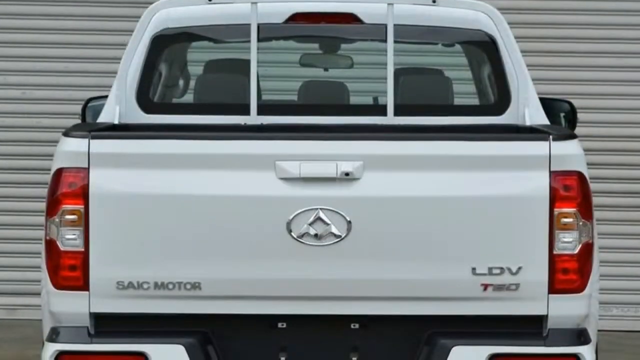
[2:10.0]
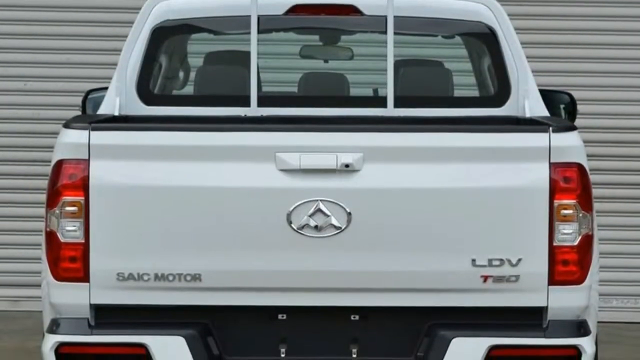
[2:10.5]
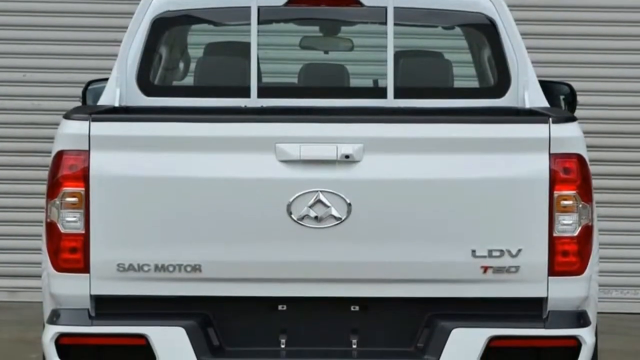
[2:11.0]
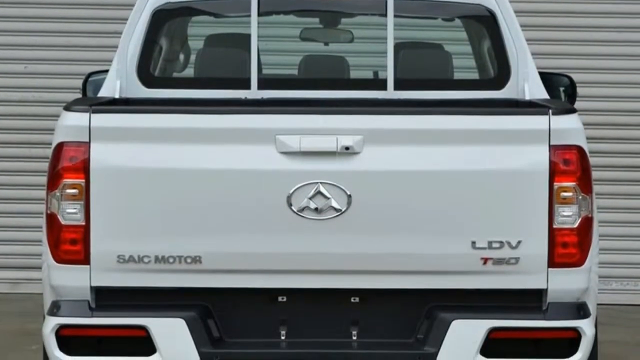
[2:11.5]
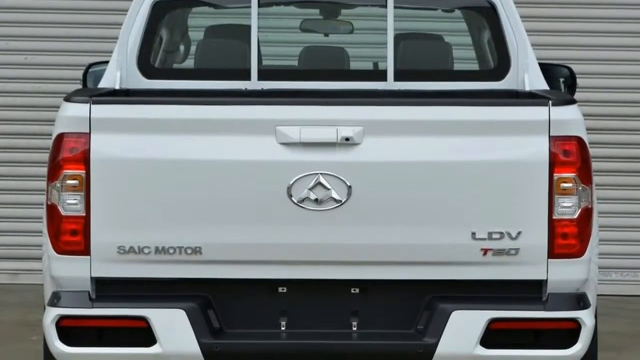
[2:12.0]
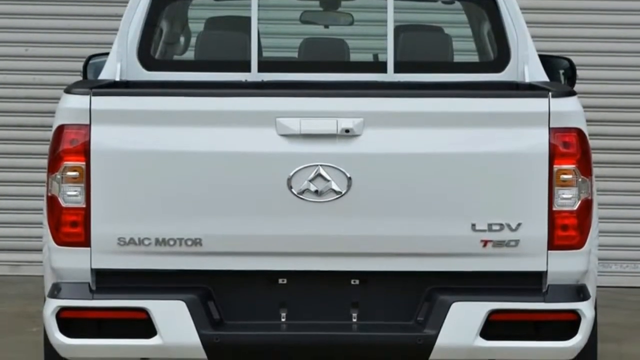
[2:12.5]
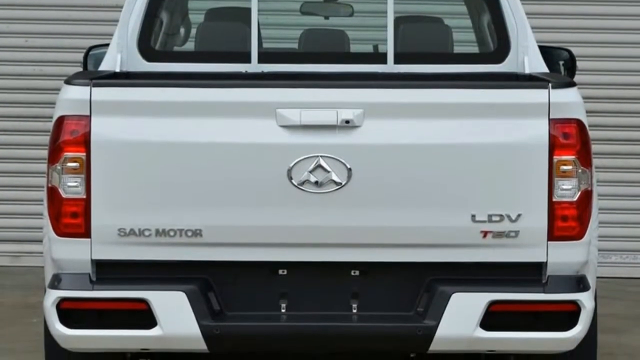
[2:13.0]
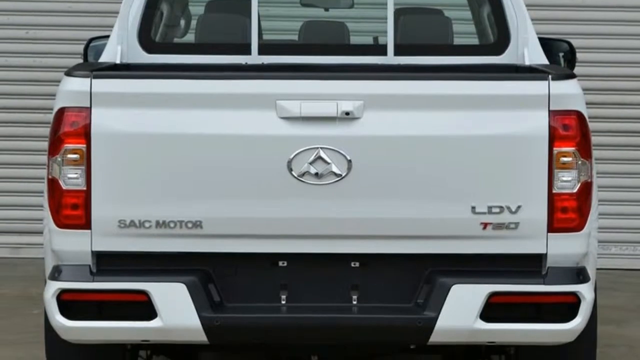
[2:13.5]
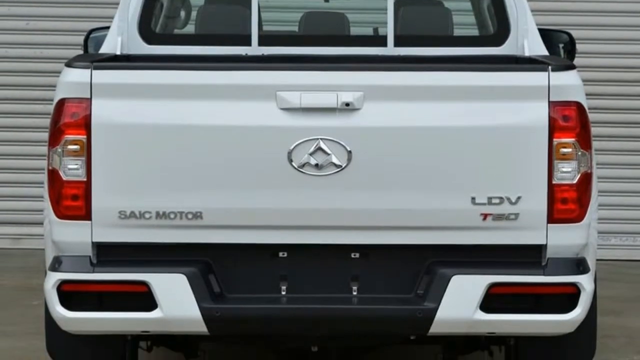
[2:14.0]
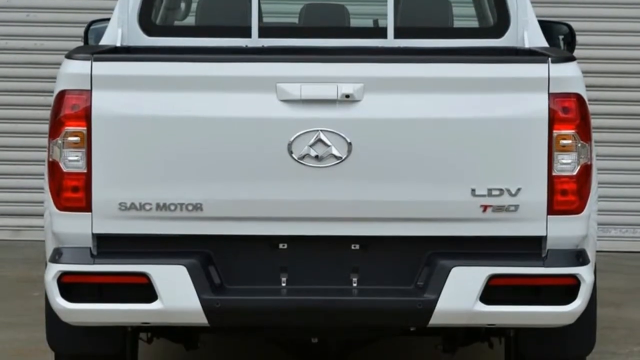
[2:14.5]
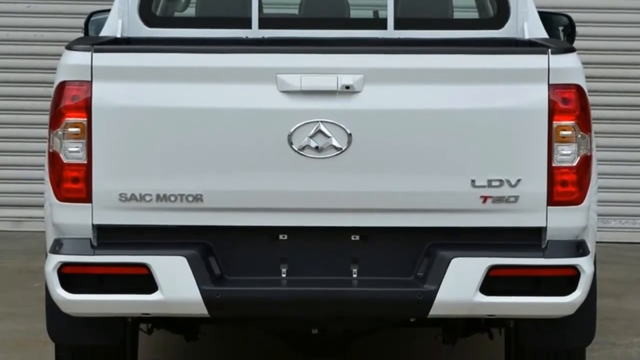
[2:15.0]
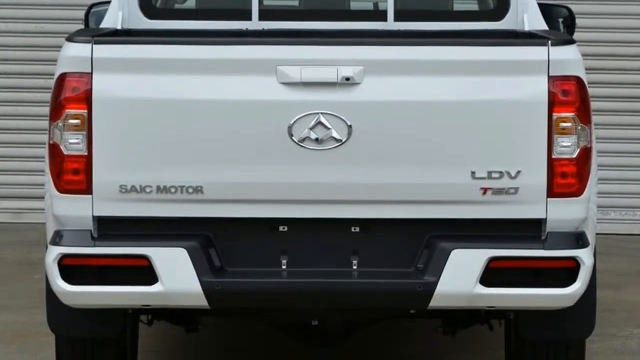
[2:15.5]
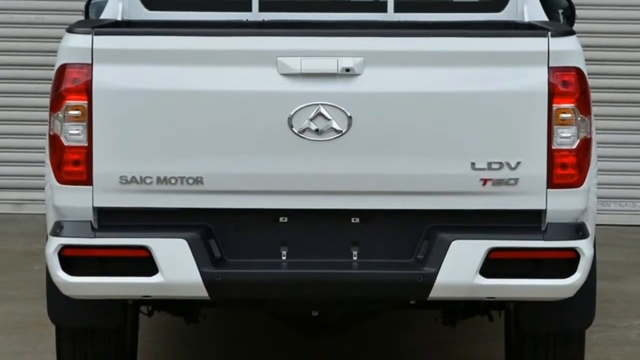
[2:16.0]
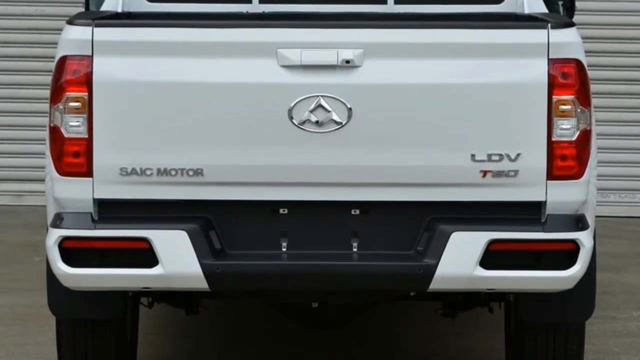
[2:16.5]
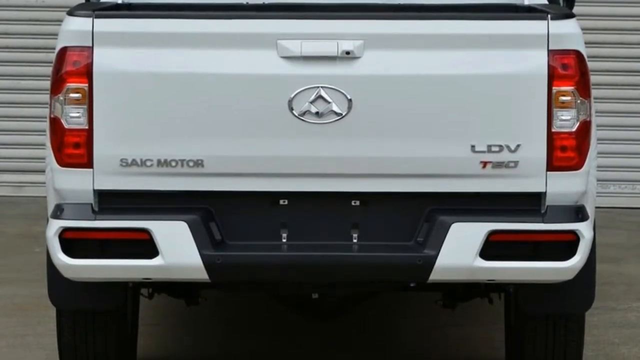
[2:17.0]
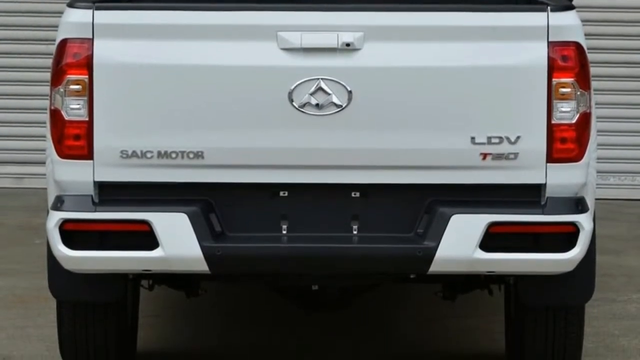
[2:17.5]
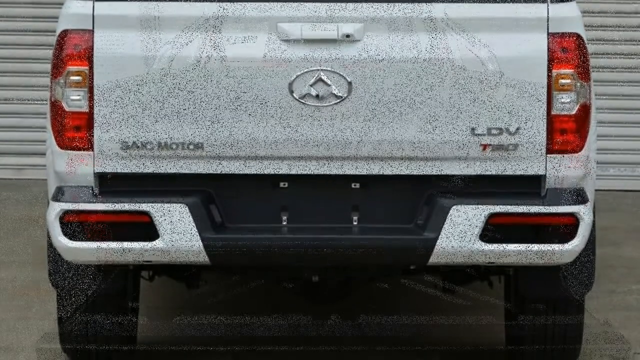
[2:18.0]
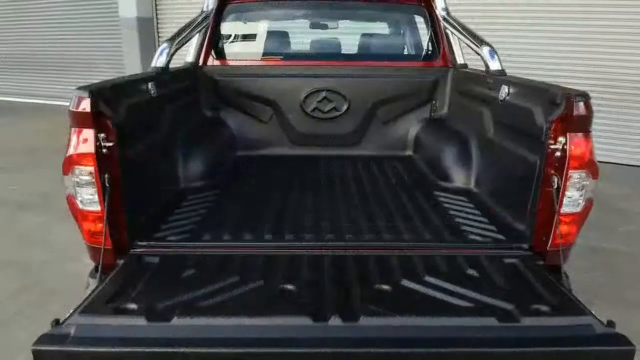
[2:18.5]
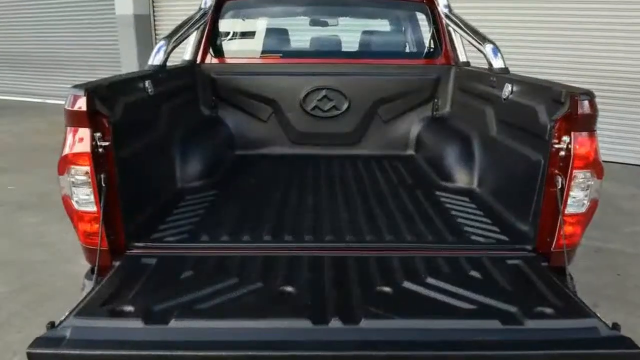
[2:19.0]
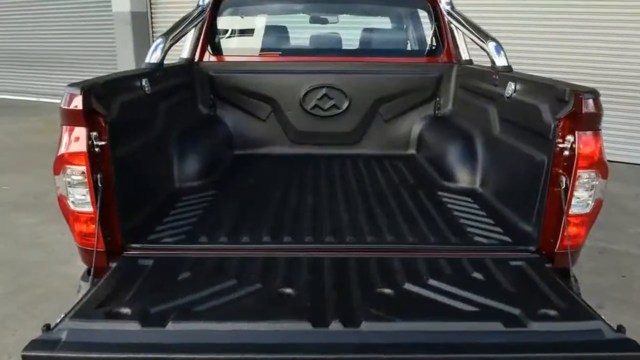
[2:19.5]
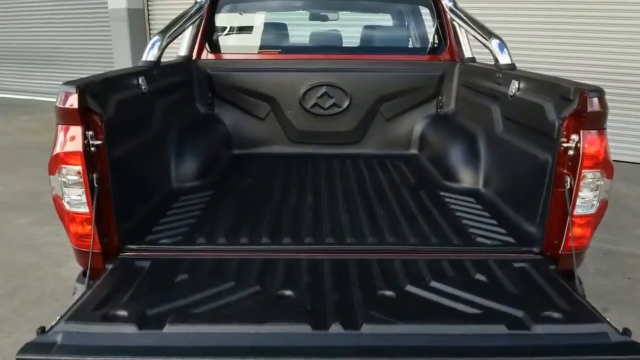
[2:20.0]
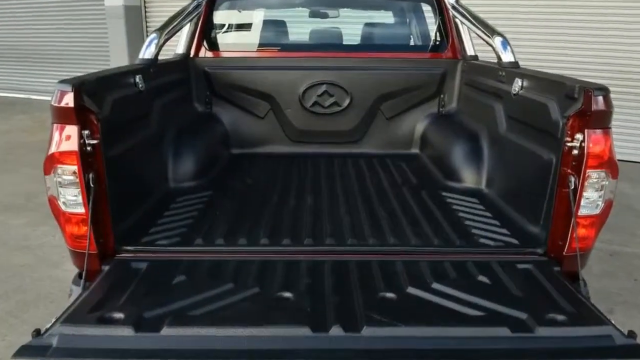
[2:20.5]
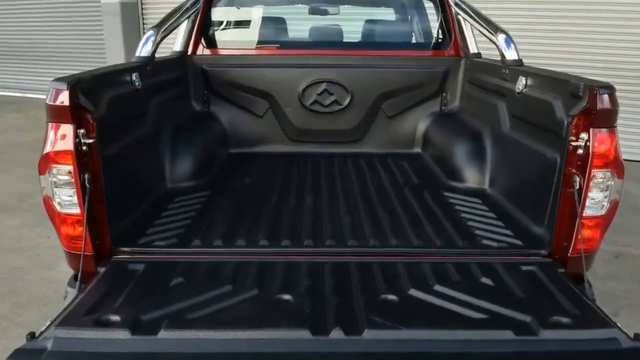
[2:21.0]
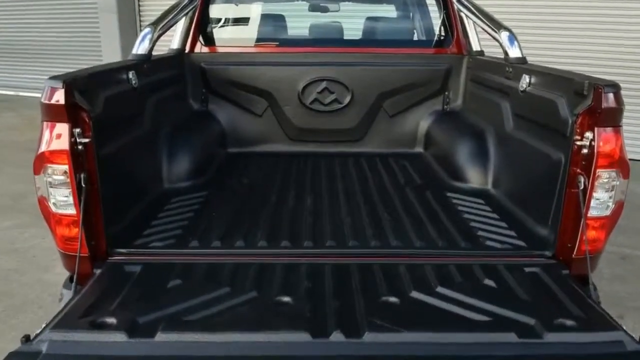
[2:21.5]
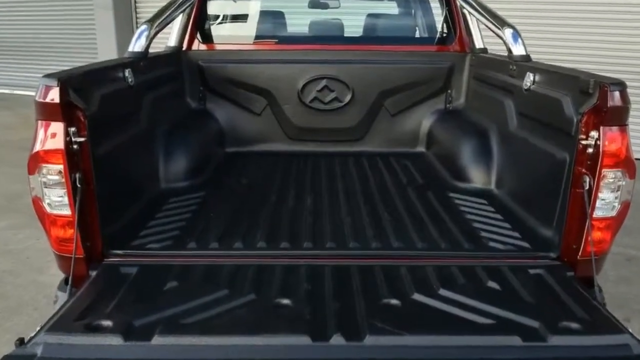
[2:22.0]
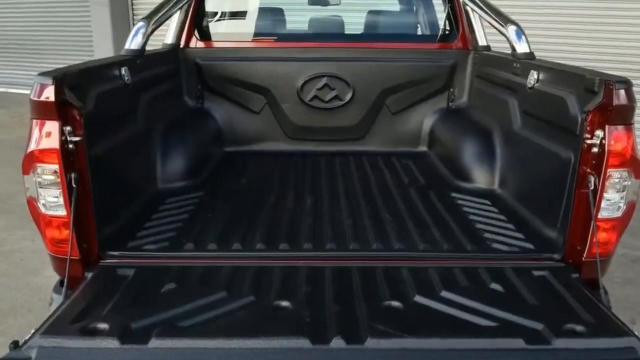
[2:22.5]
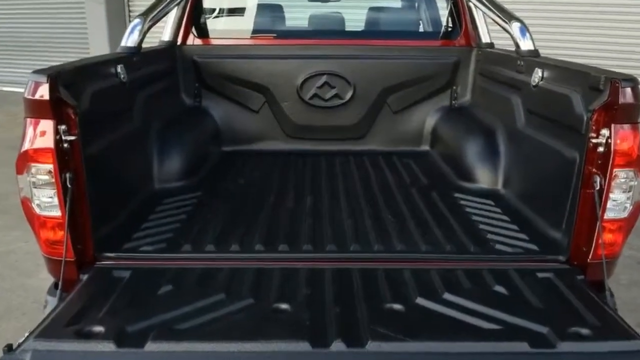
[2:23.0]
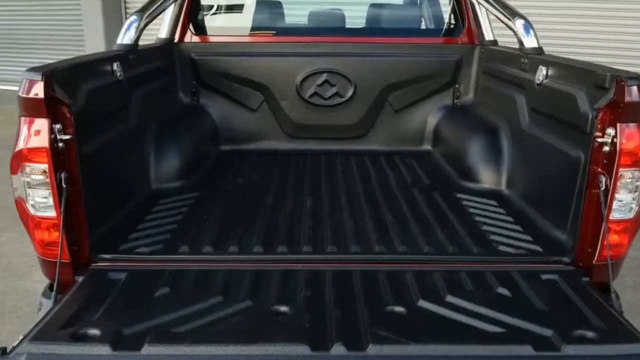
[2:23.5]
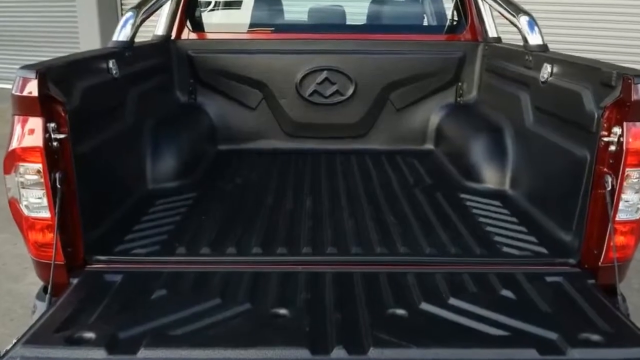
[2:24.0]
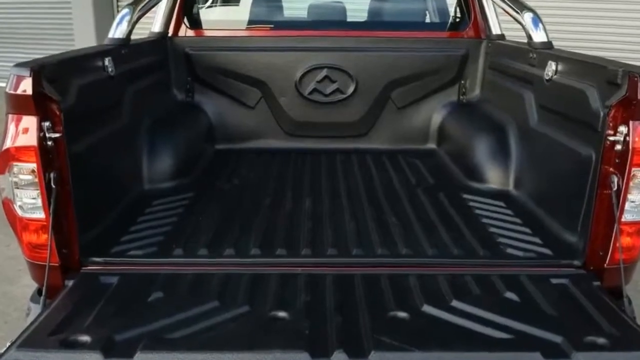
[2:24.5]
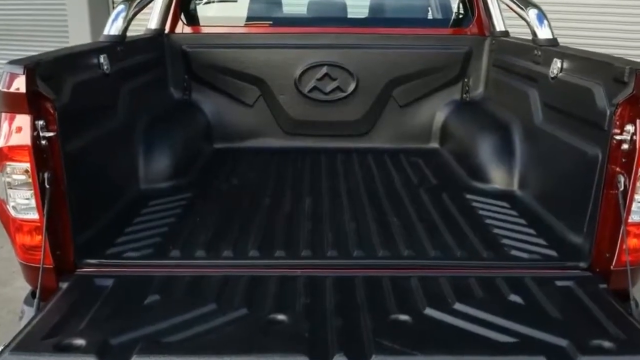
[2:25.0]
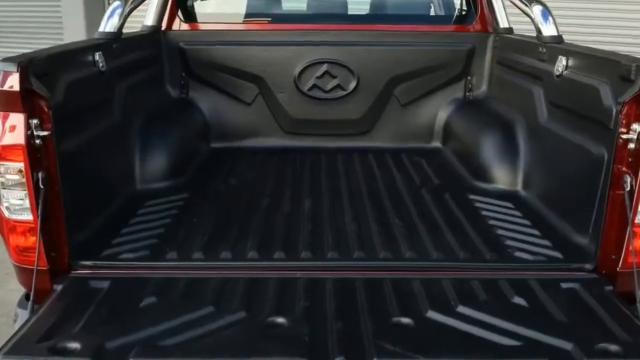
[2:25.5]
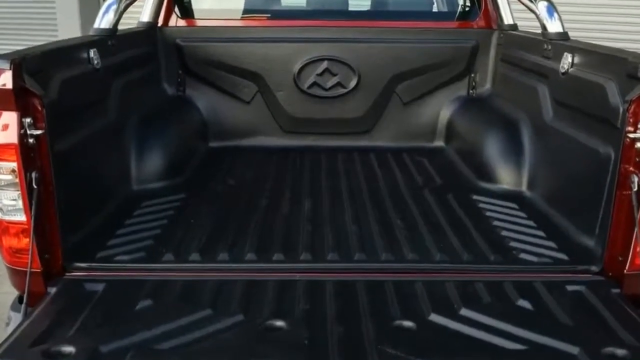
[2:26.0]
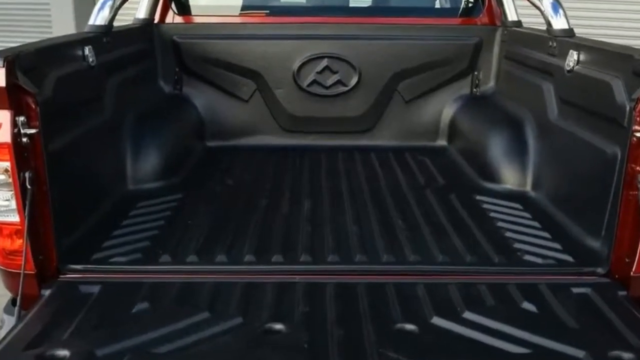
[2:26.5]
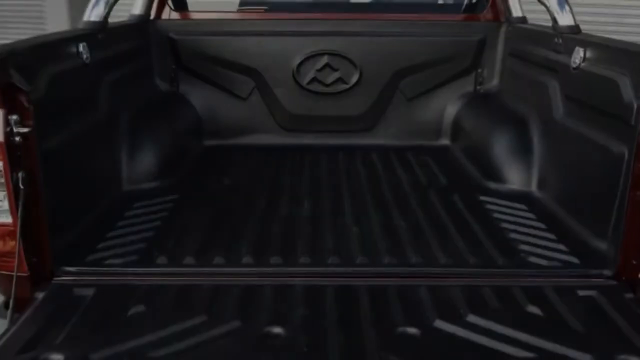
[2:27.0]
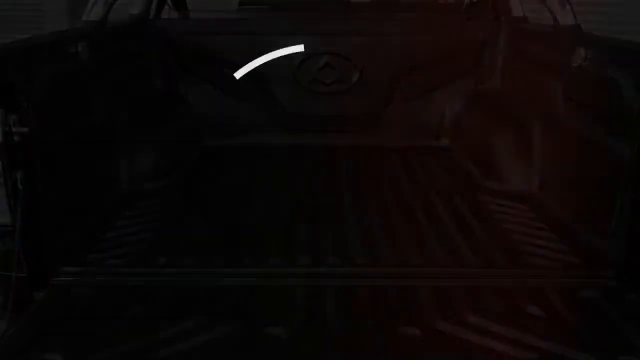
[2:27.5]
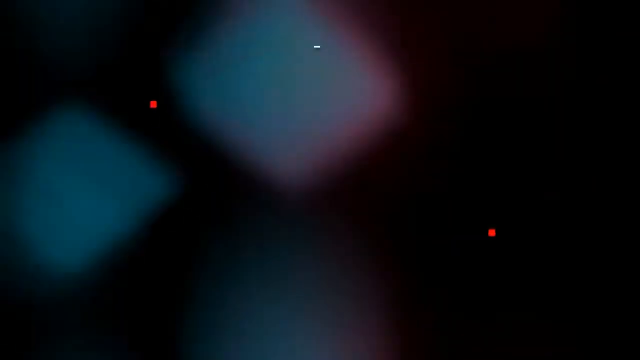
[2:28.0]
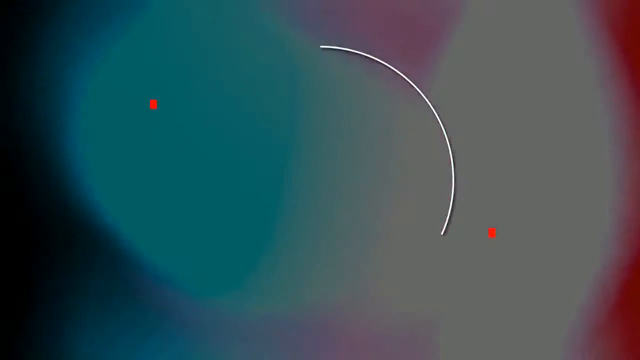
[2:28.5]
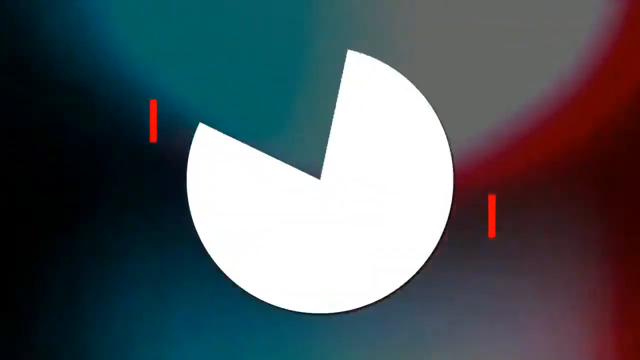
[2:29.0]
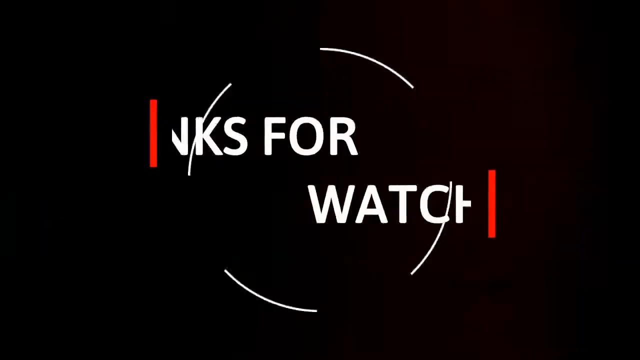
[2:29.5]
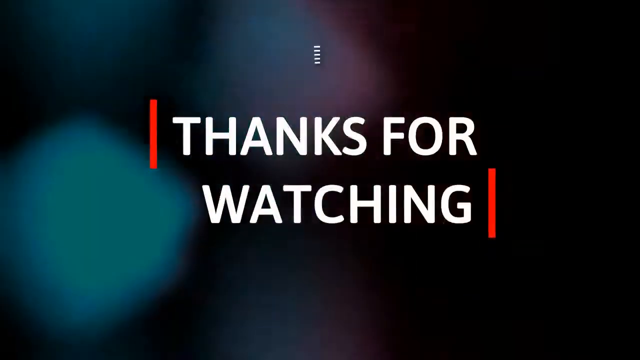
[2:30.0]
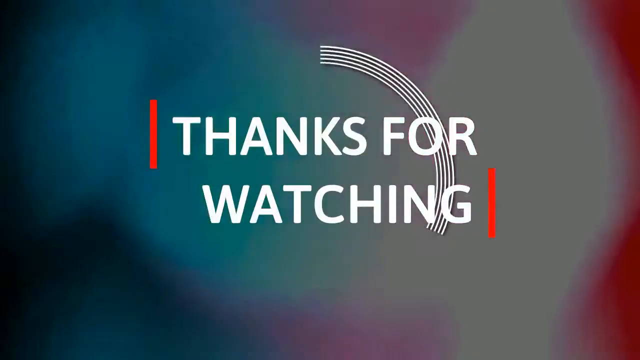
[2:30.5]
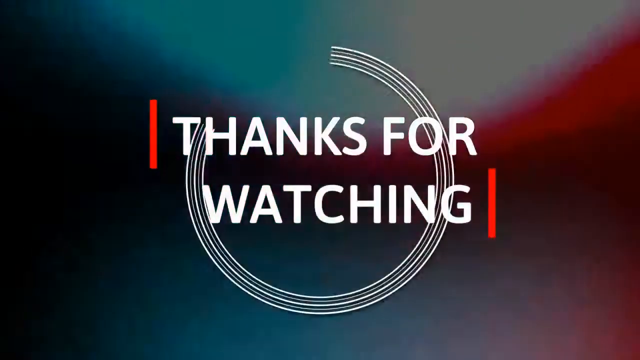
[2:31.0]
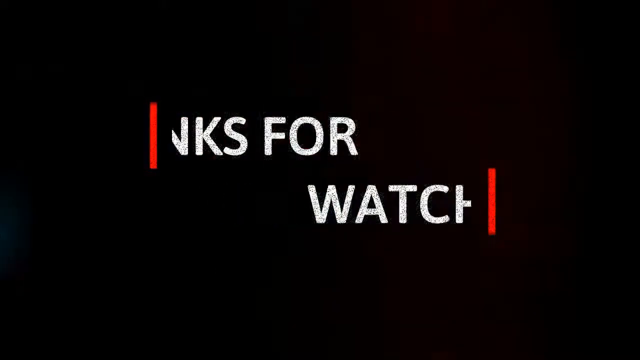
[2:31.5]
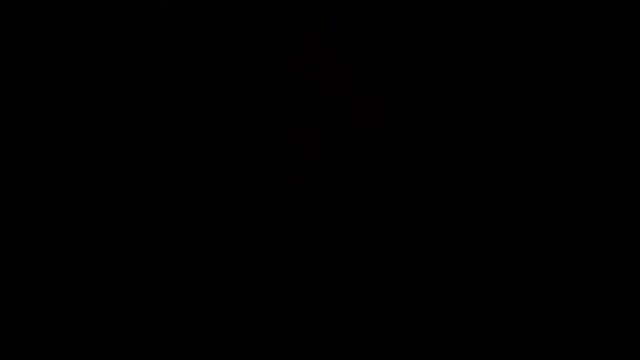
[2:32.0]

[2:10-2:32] The back of a white truck is shown, with a window divided into three segments and the text "SAIC Motor LDV" appearing twice. The camera pans down toward the bottom of the vehicle, showing red taillights. The back has been opened up, like a truck bed. A message then pops up with some spinning and says "thanks for watching," and the words disappear. It then cuts to a shot of the truck, with beige siding on the front or side of a house or building in the background.